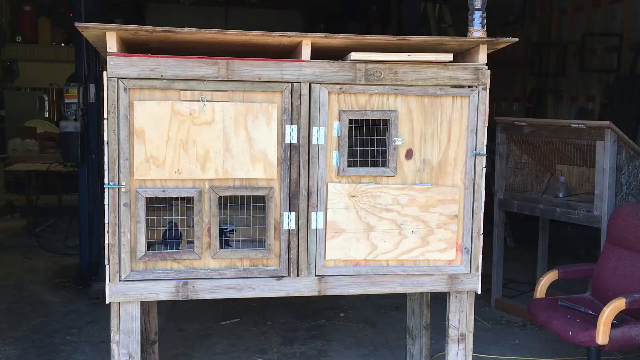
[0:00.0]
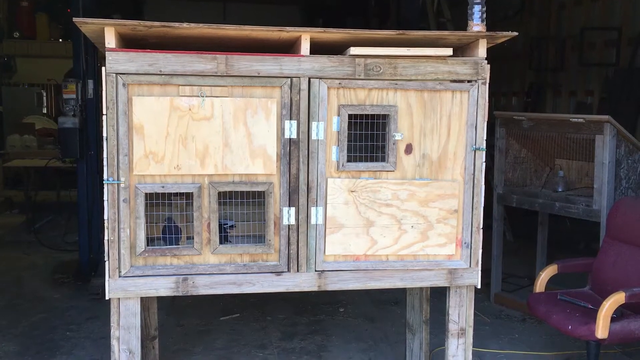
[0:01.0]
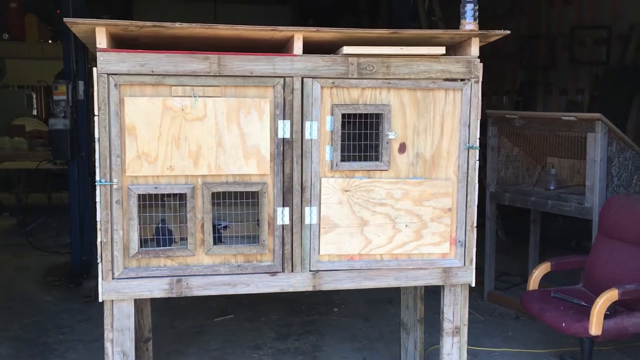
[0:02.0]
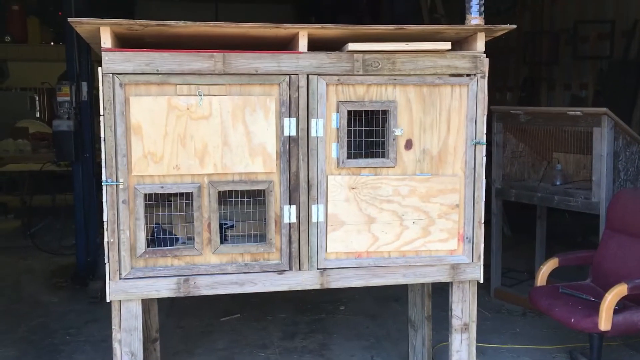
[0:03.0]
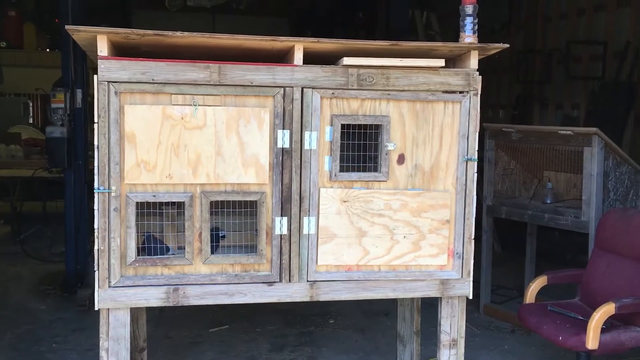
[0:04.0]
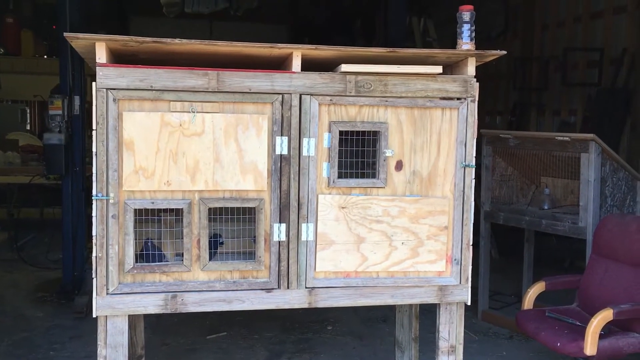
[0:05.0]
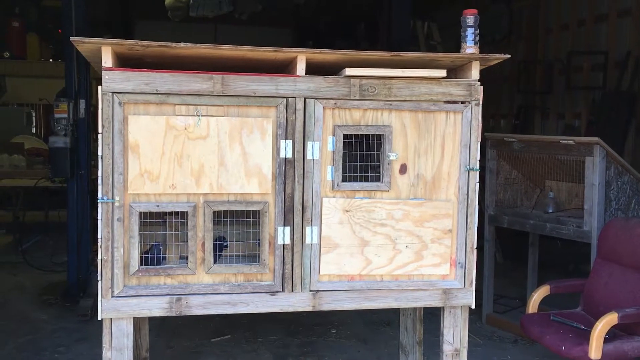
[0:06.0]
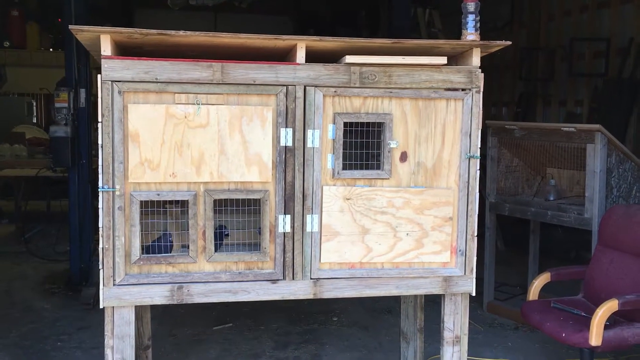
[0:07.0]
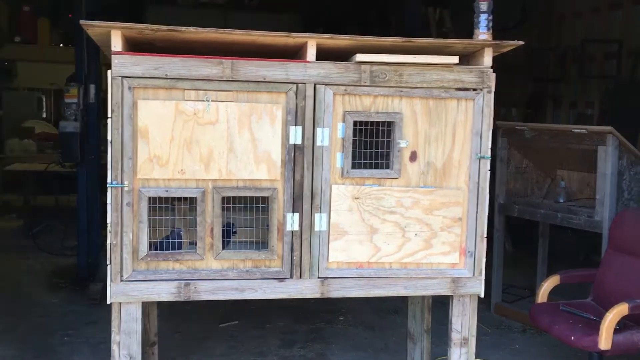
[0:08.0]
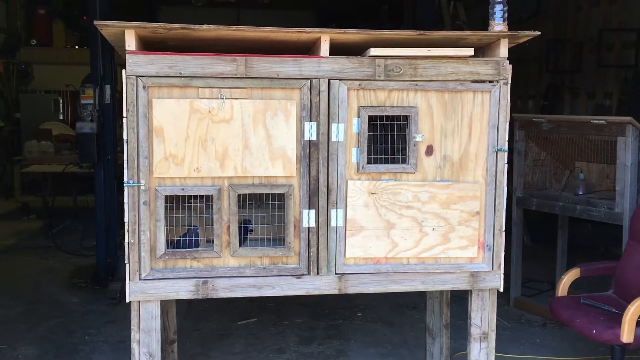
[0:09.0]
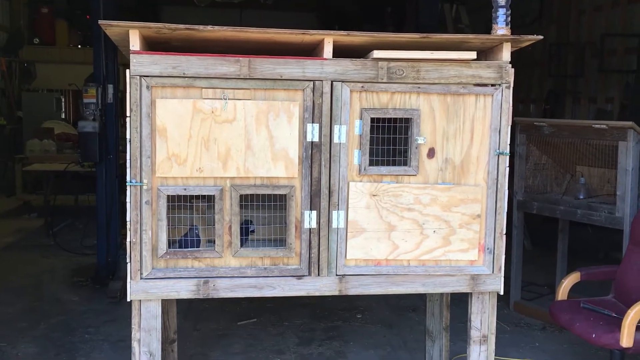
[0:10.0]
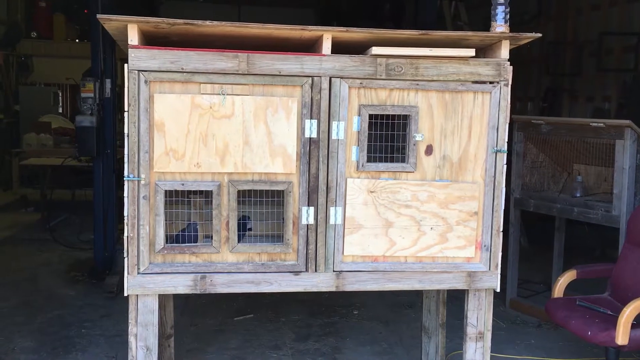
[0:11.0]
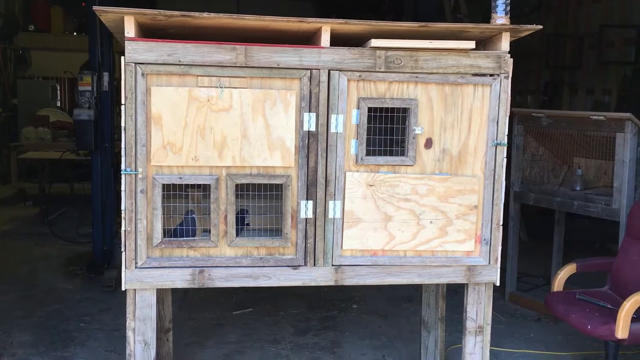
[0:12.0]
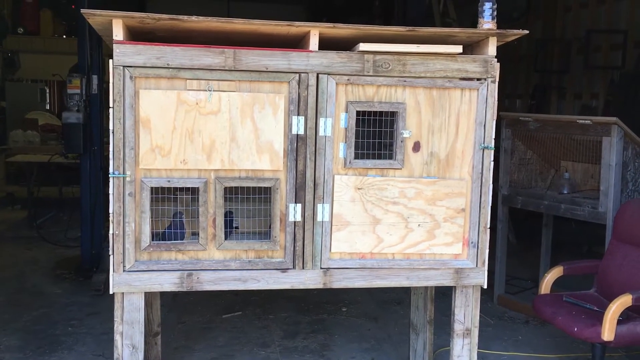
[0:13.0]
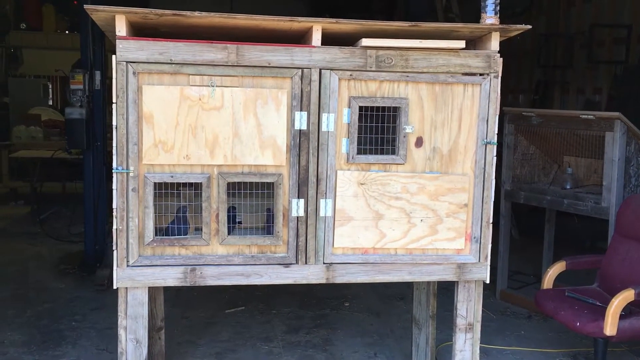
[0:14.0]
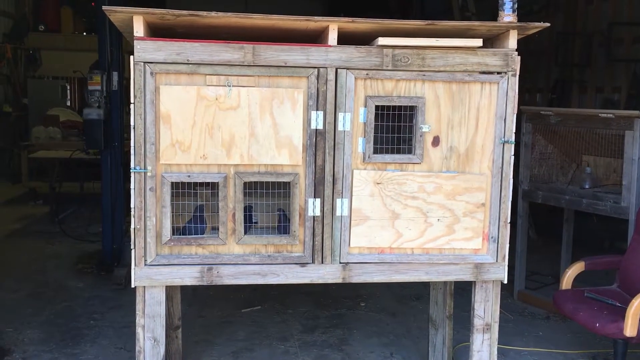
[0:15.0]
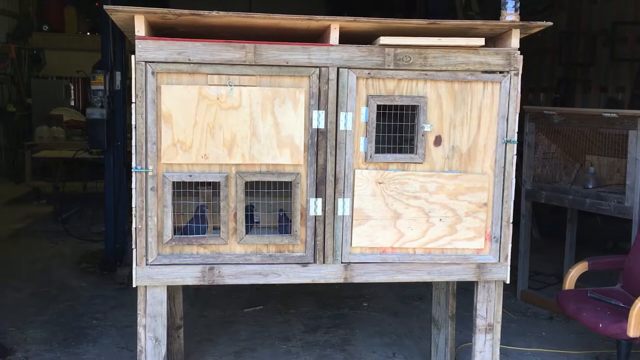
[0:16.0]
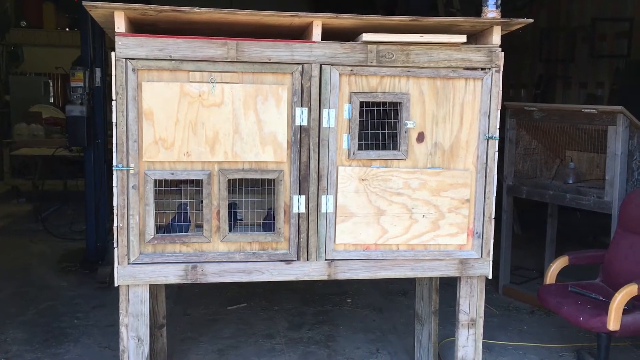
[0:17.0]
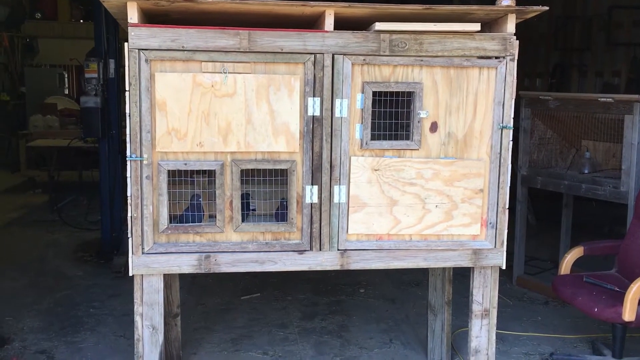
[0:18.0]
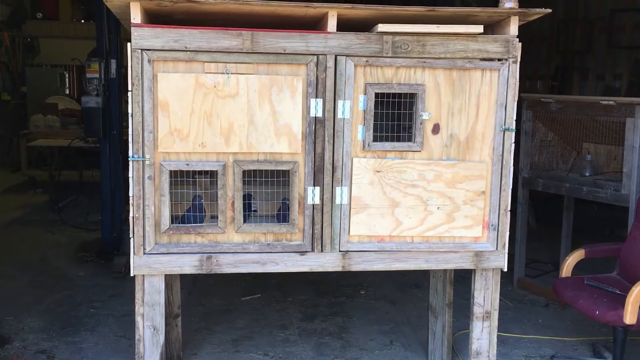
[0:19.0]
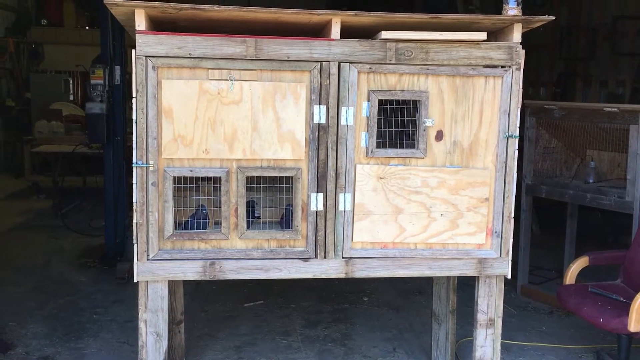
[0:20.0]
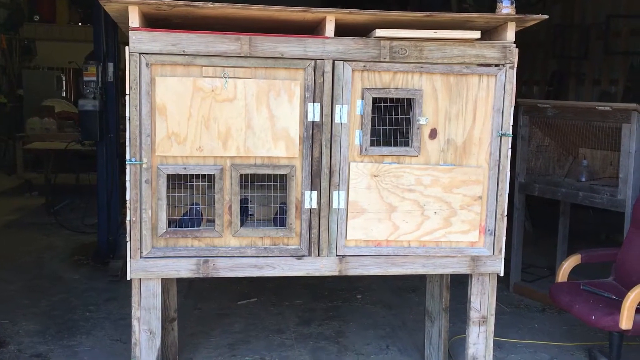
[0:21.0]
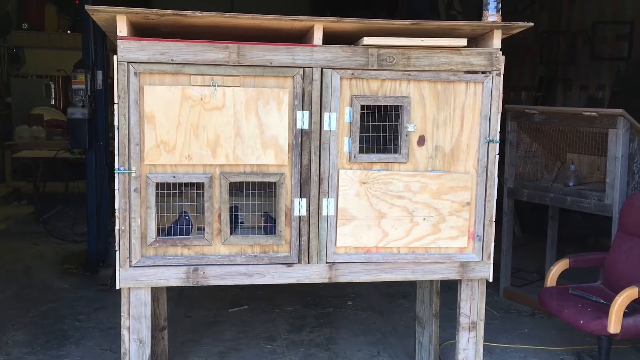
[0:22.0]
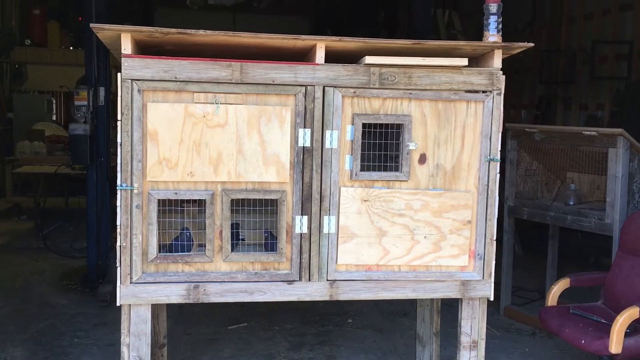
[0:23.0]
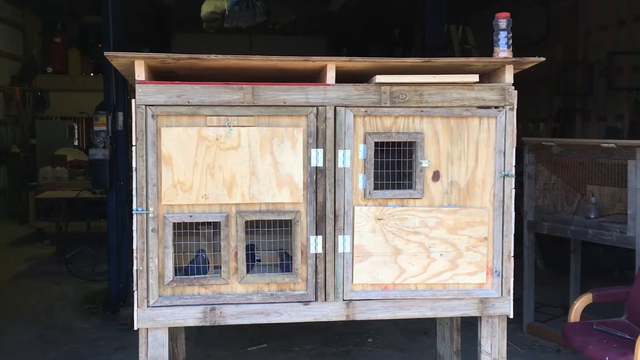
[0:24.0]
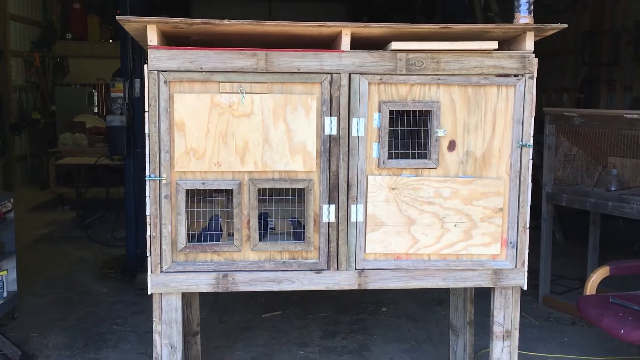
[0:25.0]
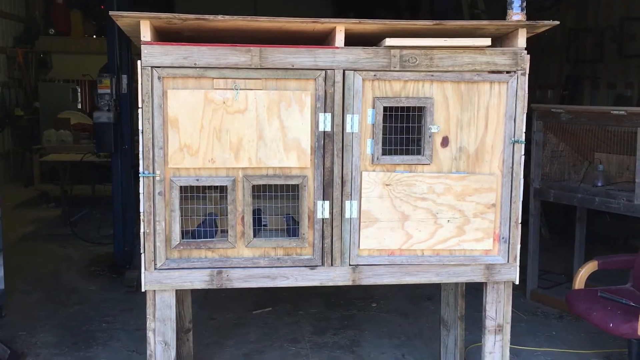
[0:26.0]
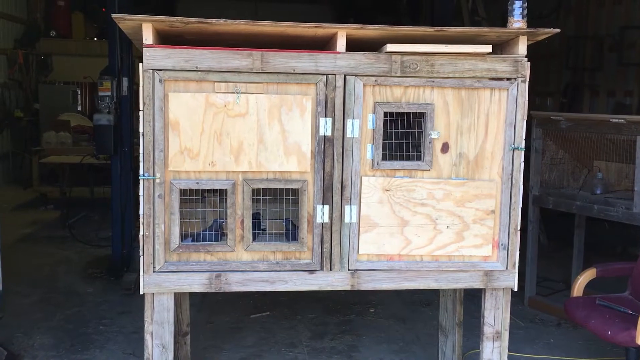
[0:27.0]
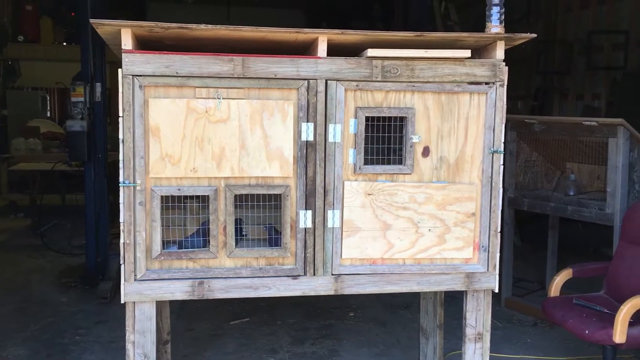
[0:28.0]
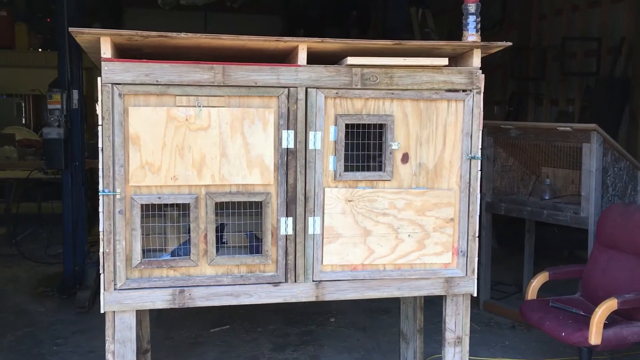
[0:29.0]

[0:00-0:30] In the middle of the screen is a structure that looks like a chicken coop, made entirely of wood, and there appears to be another one back behind it. To the right of it is a maroon chair. The shot stays on the coop, and there might be some birds inside. Its doors are a lighter wood color than the outside of the coop, and the doors have windows with what looks like chicken wire. Toward the end, the camera moves a little closer to the coop. The setting looks like it may be a shop.